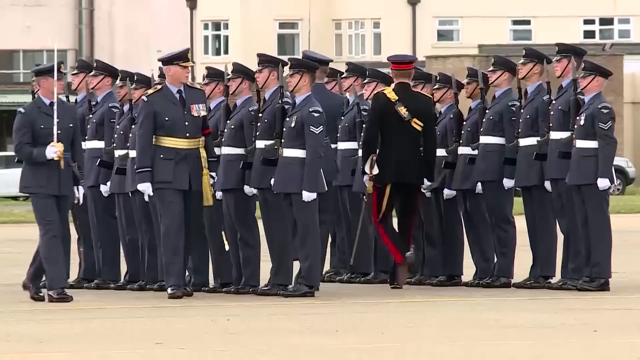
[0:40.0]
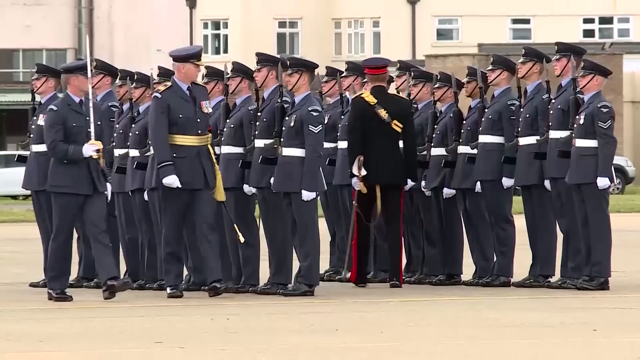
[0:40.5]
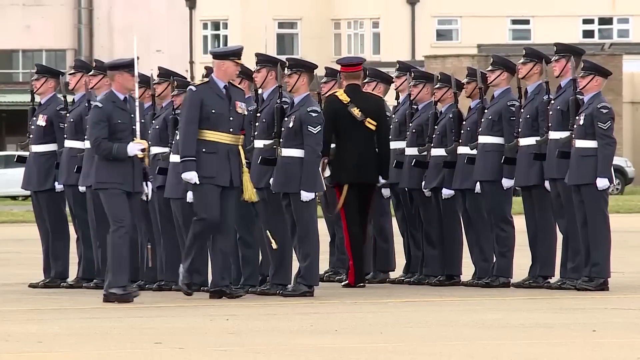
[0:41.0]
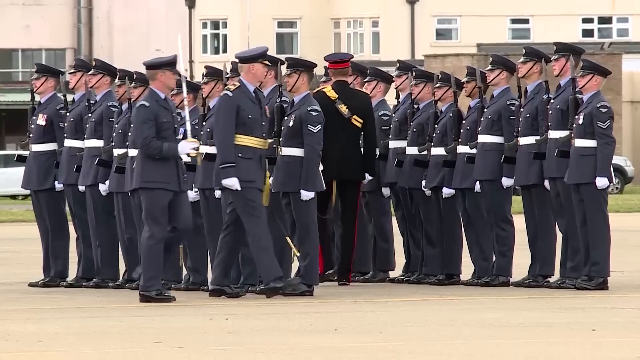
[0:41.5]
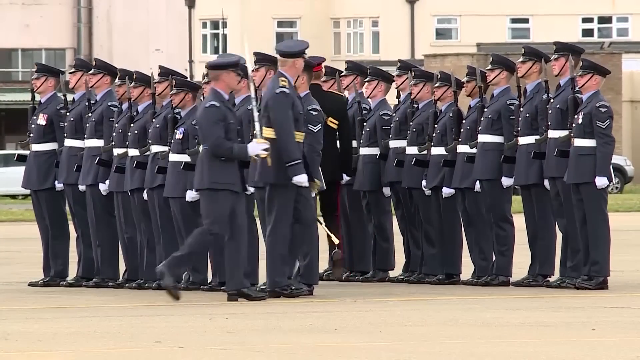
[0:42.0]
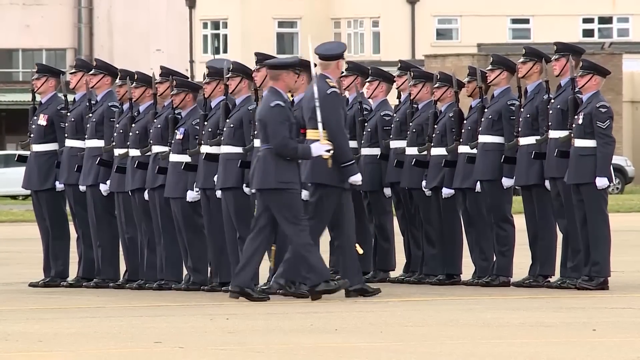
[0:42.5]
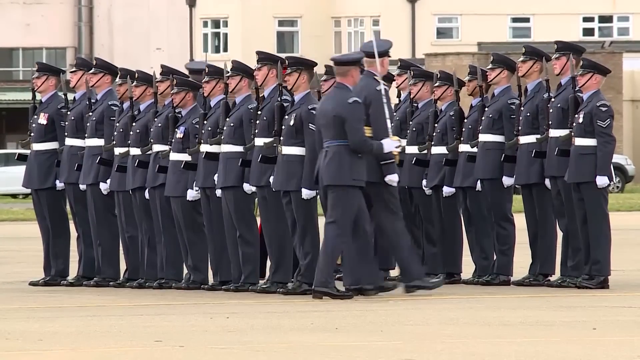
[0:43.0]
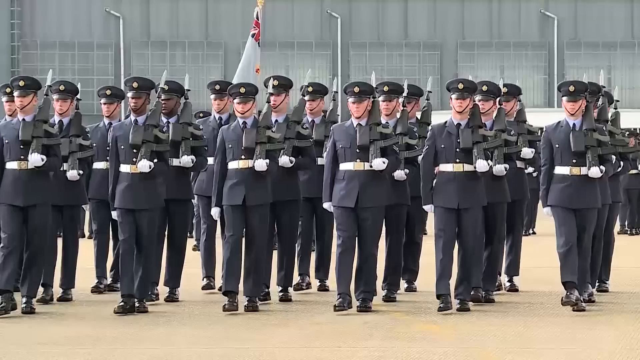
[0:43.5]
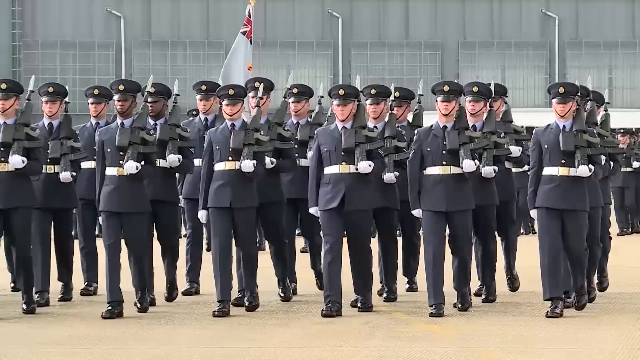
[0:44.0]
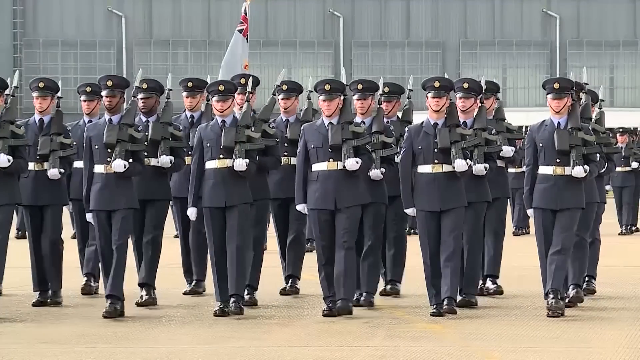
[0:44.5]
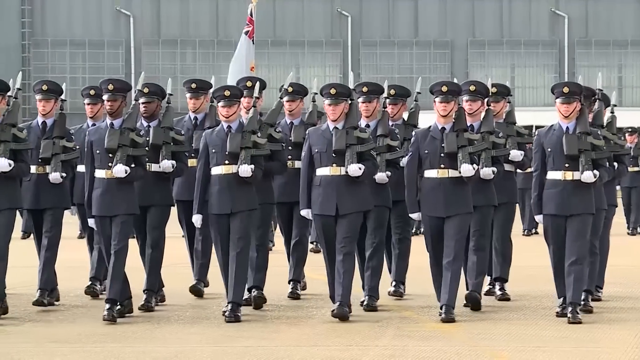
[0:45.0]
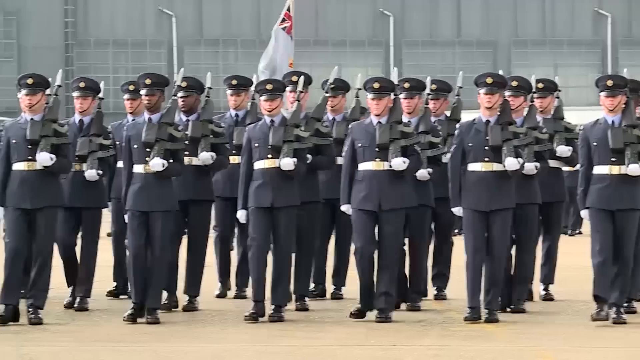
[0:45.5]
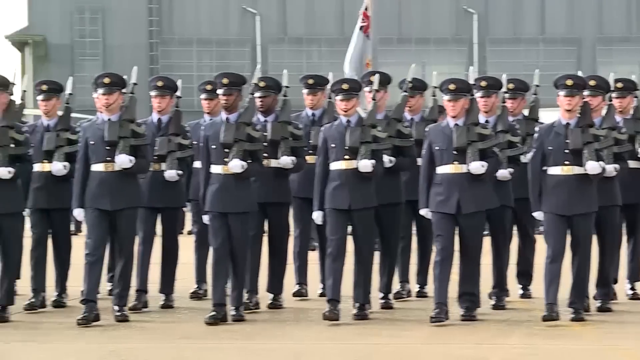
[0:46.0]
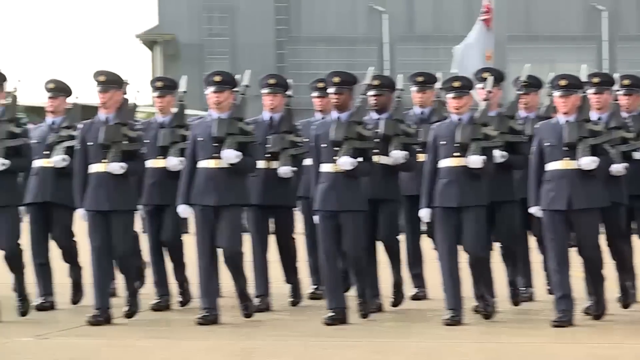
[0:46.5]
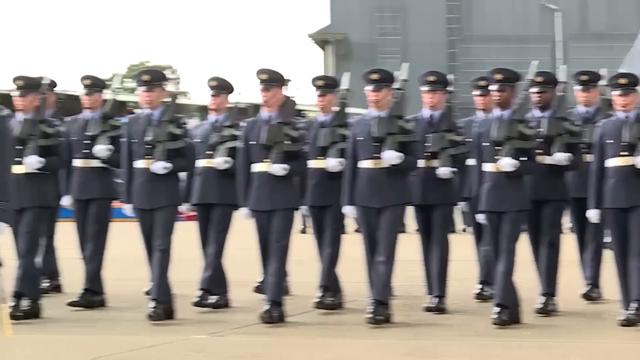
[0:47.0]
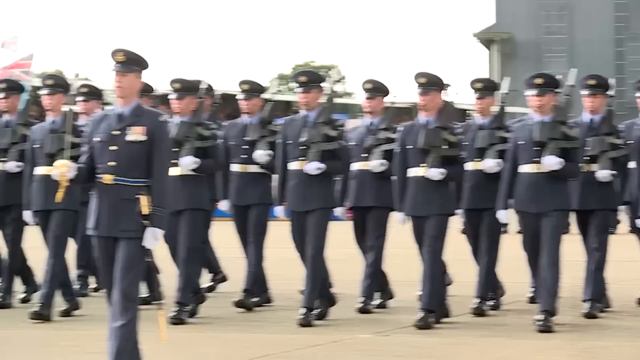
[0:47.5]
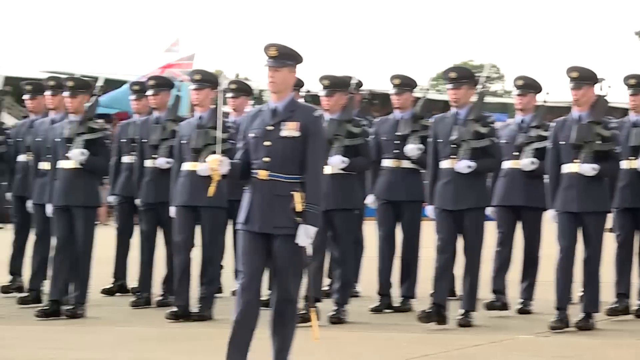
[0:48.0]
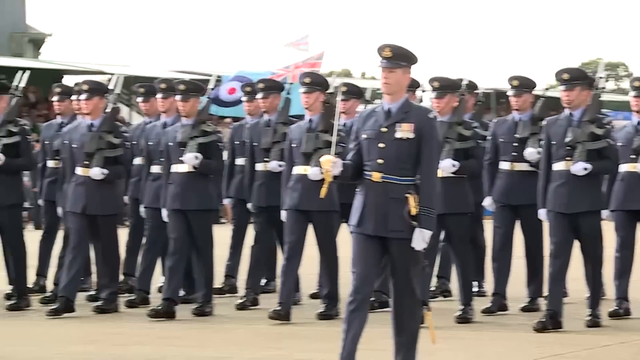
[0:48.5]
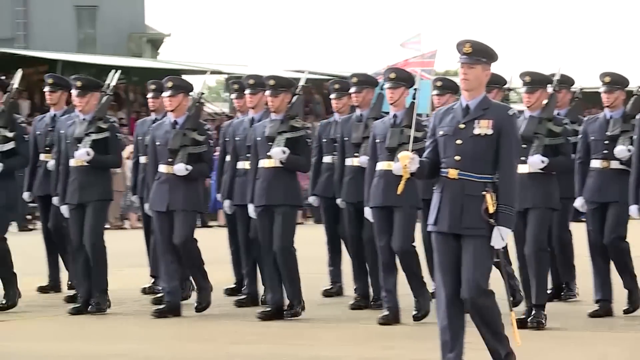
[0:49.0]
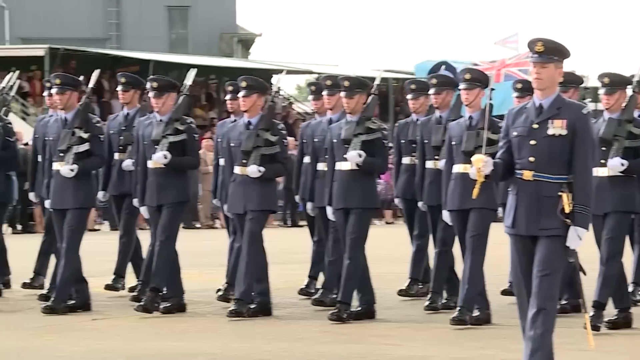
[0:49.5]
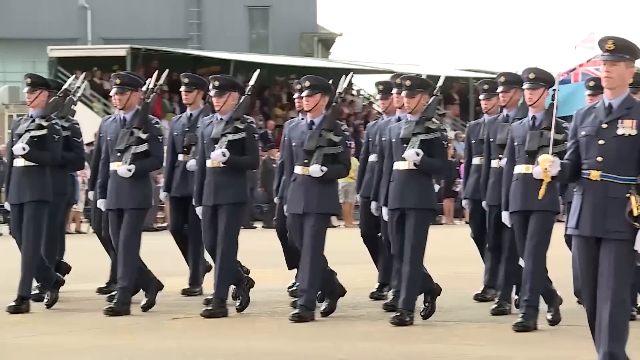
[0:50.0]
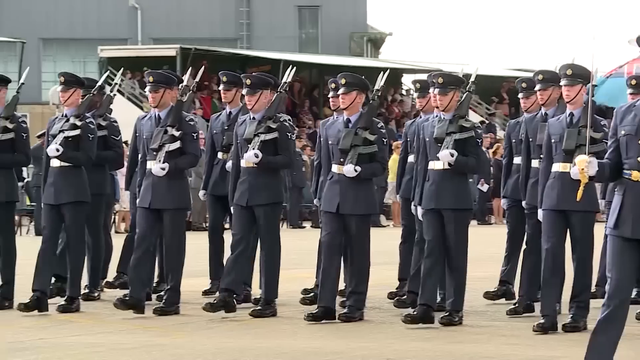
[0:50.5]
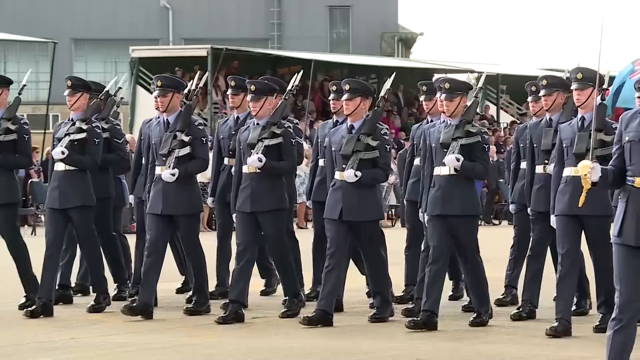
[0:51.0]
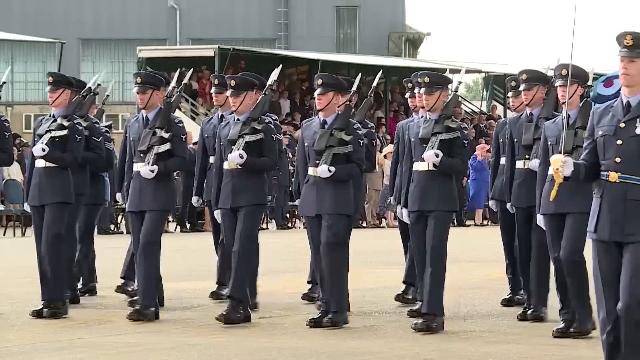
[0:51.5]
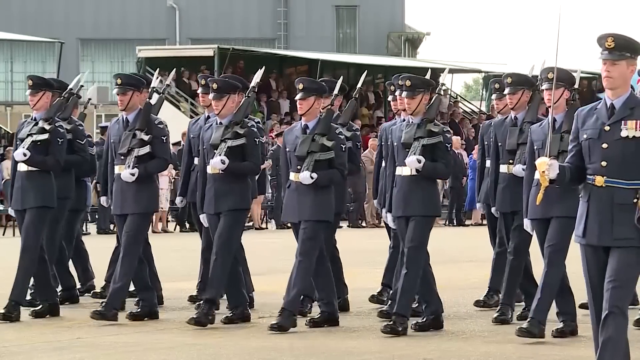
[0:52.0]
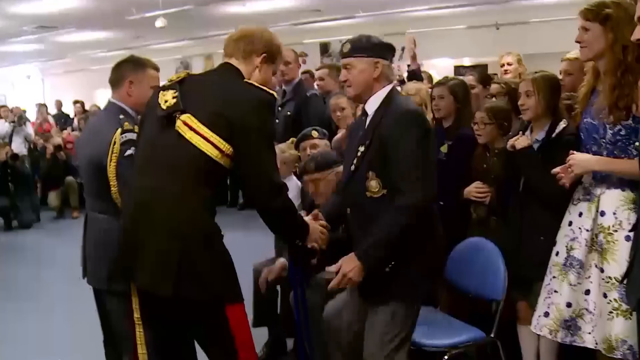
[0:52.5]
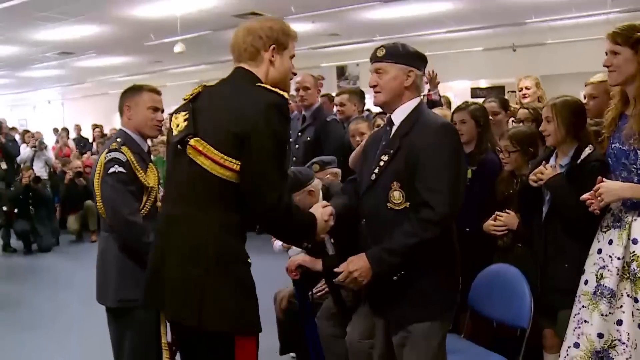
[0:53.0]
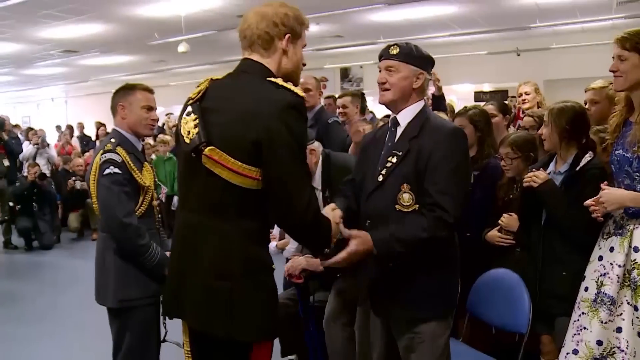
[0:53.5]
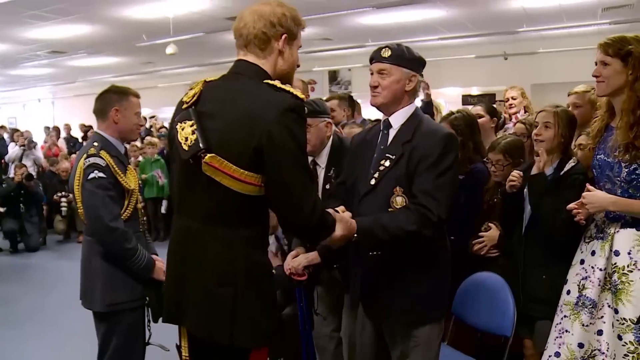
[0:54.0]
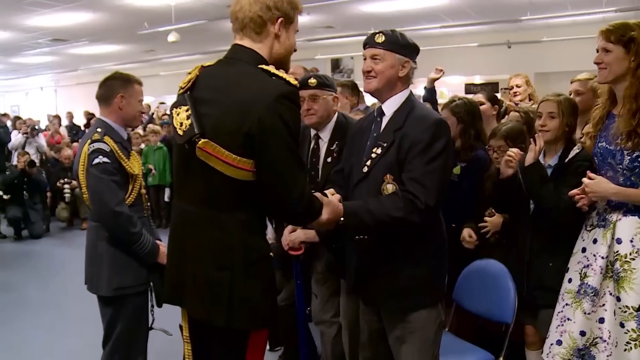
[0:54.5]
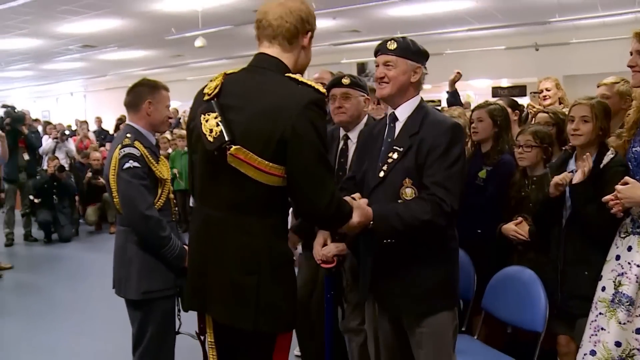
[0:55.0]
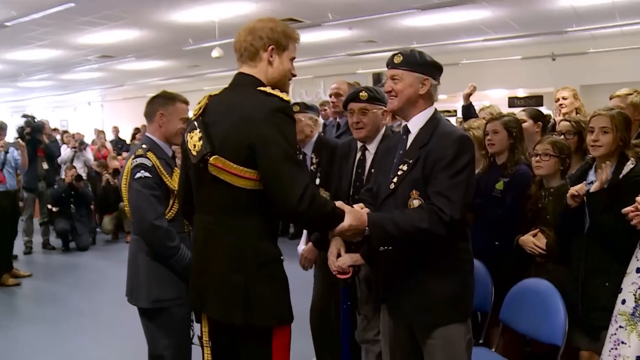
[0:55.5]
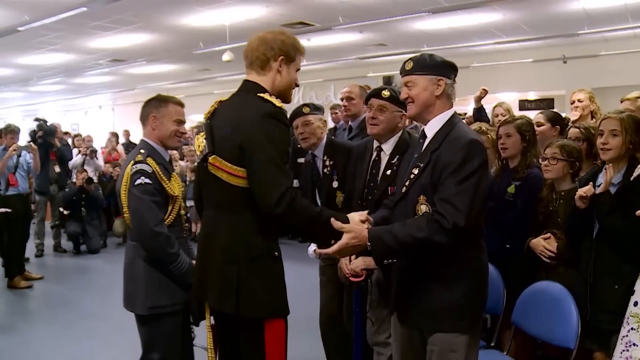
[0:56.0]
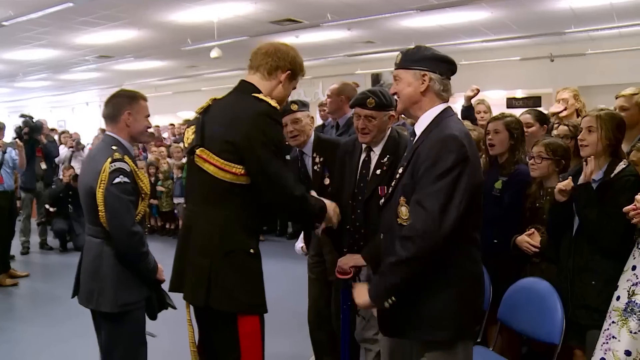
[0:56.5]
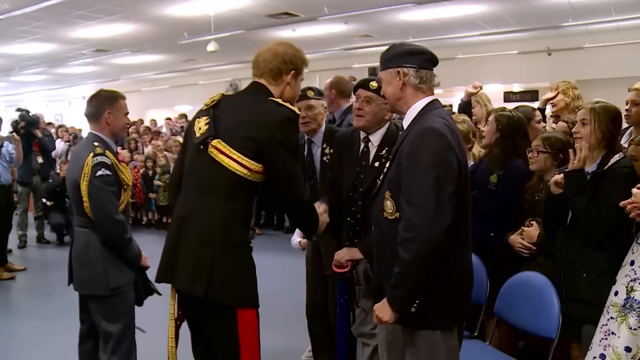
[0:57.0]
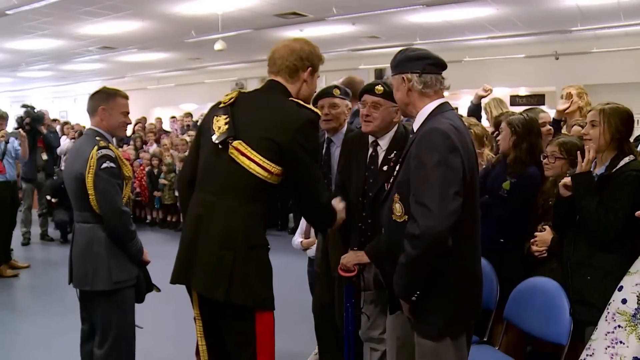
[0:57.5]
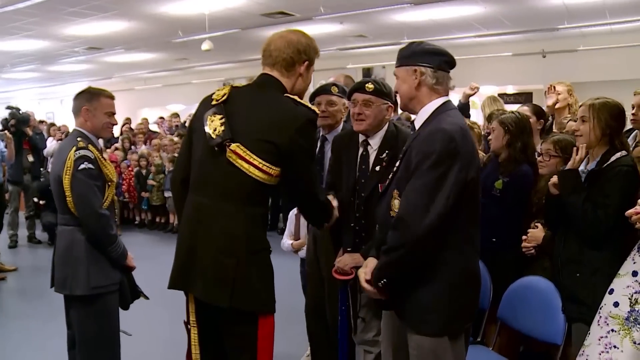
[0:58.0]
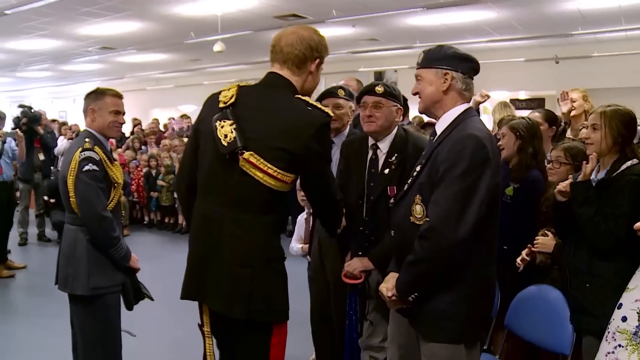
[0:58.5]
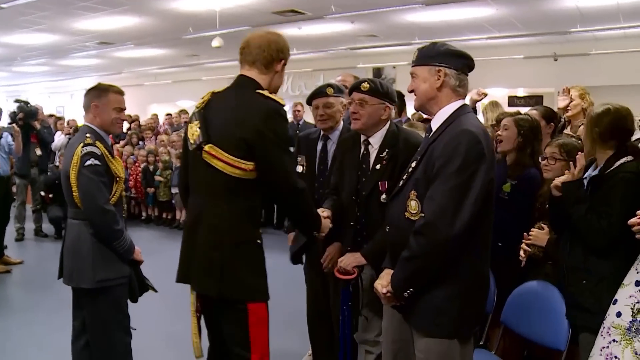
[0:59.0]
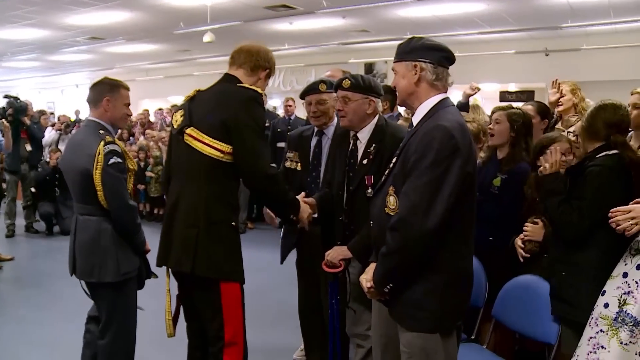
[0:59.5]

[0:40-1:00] About three rows of military men wear flat black caps with straps under their chins, black trousers, and black shirts with white belts. Prince Harry walks along inspecting the men, wearing a black military uniform with red stripes down the legs. Two other men with swords walk with him, and they walk in between the rows of men. Then the military men do a synchronized march as the camera pans along the whole line; there are probably around 300 men marching in sync with each other. The scene then moves indoors. Prince Harry has his hat off and shakes hands with a man who is probably an ex-soldier, decorated with all his medals and wearing a beret. Everyone is stood up, kind of waving and trying to catch Prince Harry's attention. He shakes the hands of these veterans, who all wear berets, while everyone is stood up, kind of waving and celebrating. Prince Harry has some kind of golden sash around his upper body.